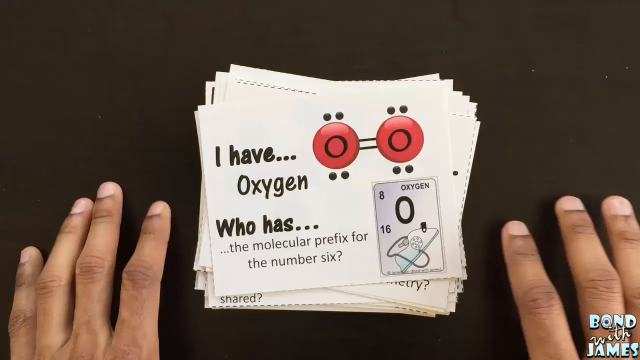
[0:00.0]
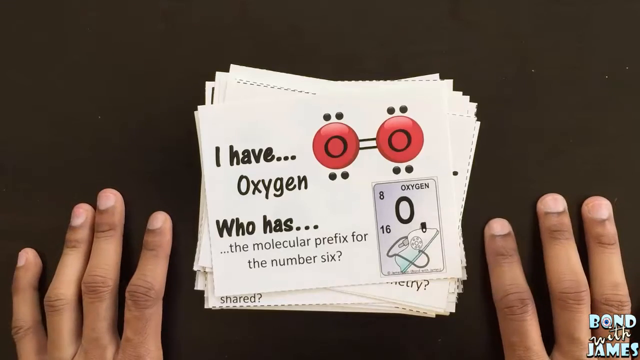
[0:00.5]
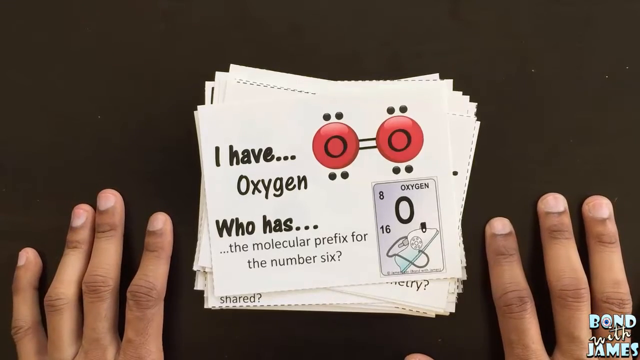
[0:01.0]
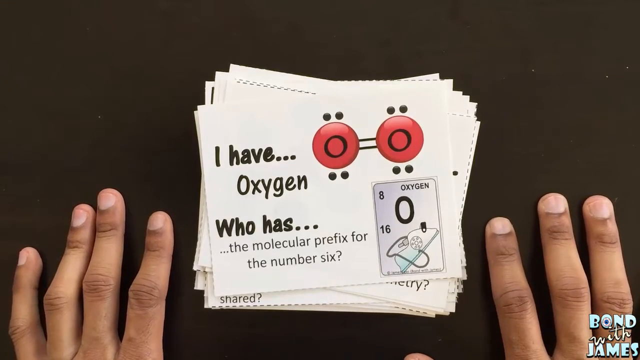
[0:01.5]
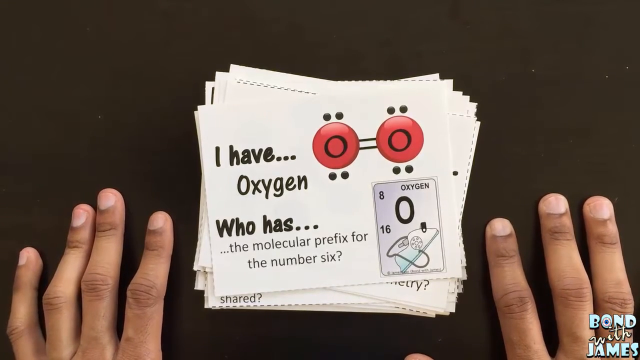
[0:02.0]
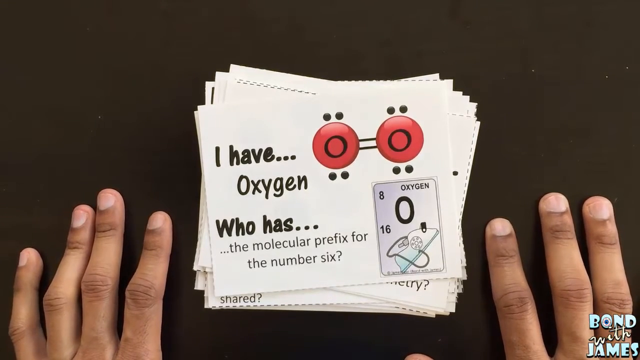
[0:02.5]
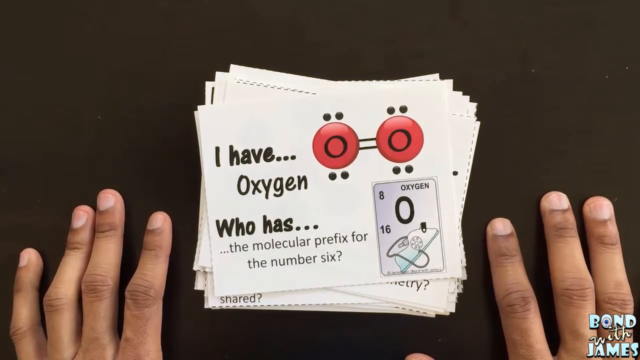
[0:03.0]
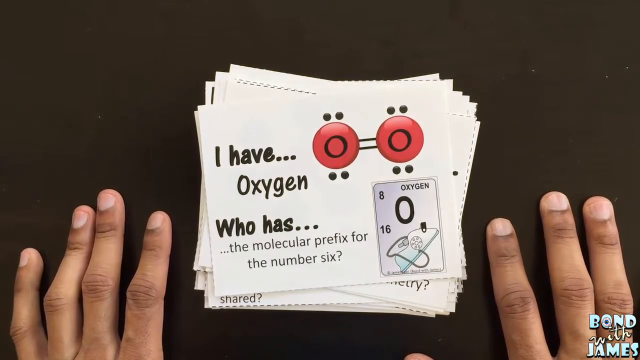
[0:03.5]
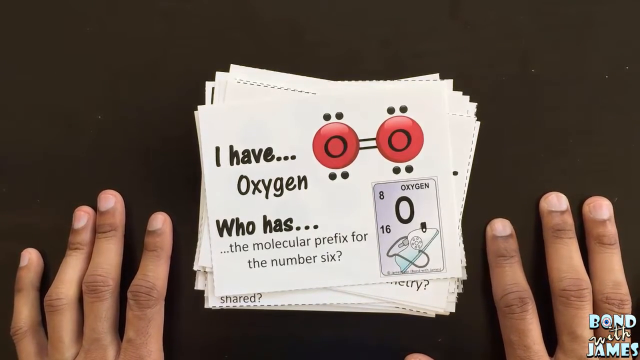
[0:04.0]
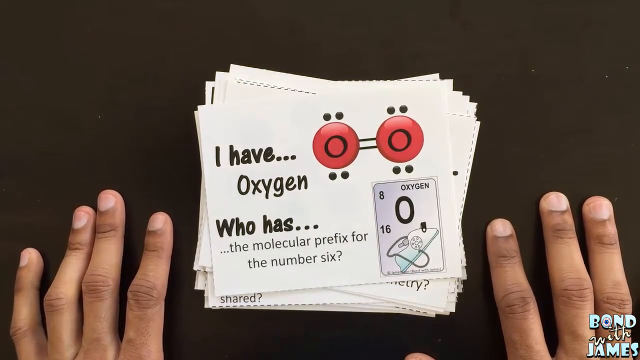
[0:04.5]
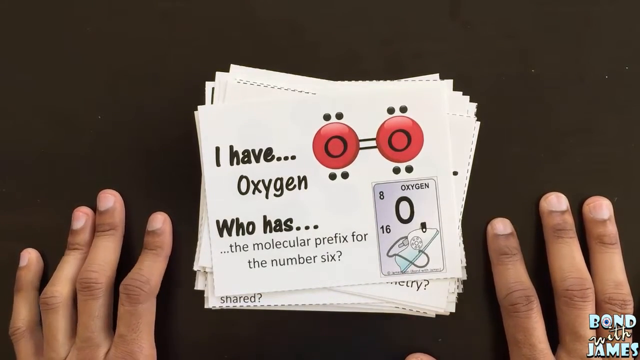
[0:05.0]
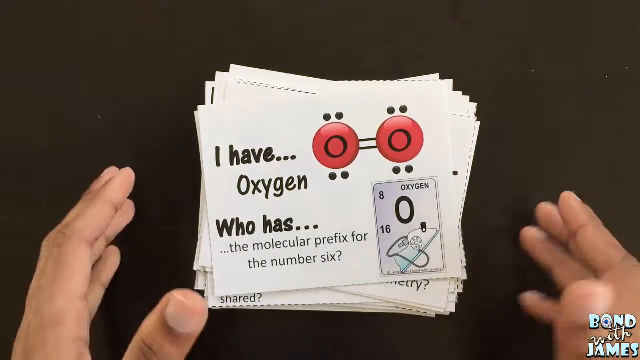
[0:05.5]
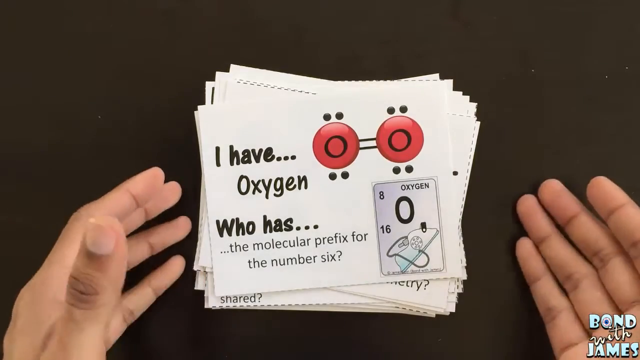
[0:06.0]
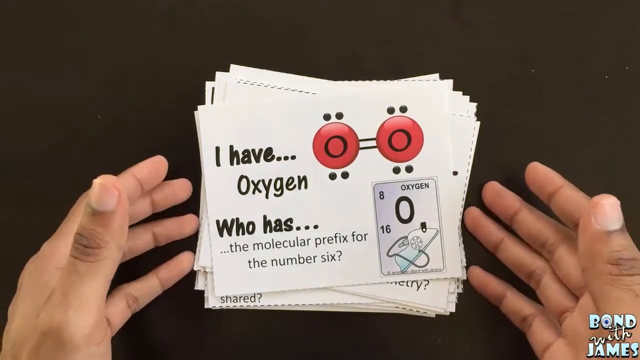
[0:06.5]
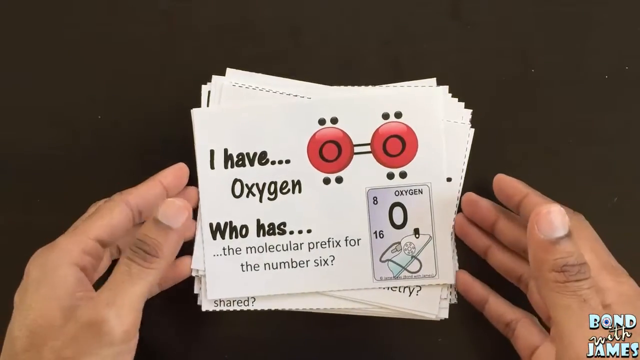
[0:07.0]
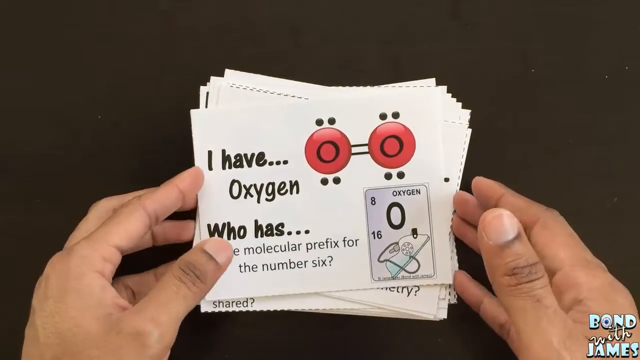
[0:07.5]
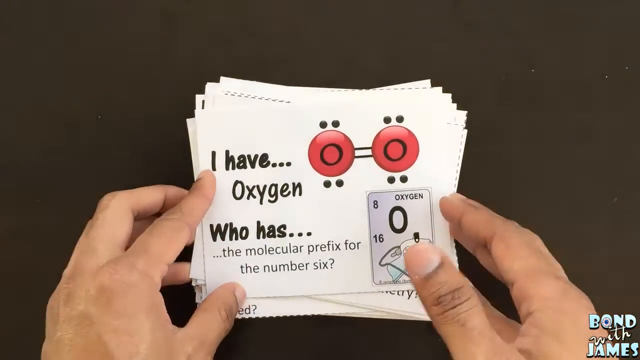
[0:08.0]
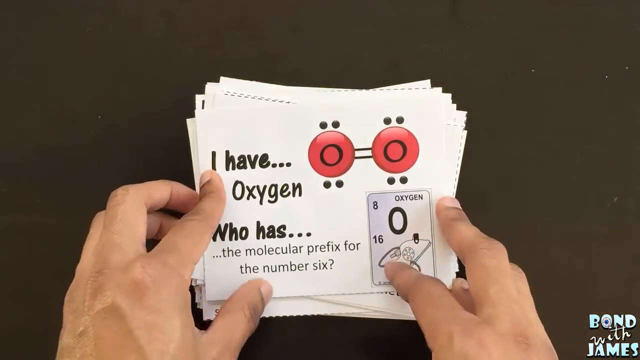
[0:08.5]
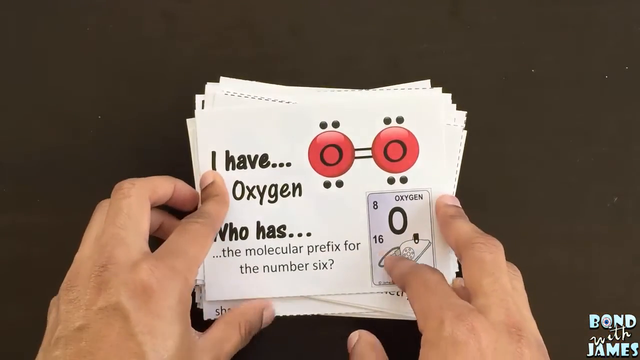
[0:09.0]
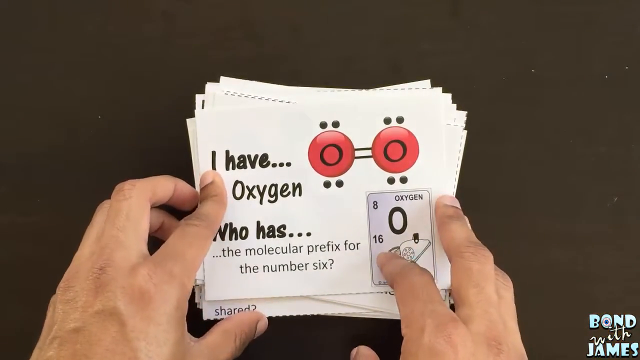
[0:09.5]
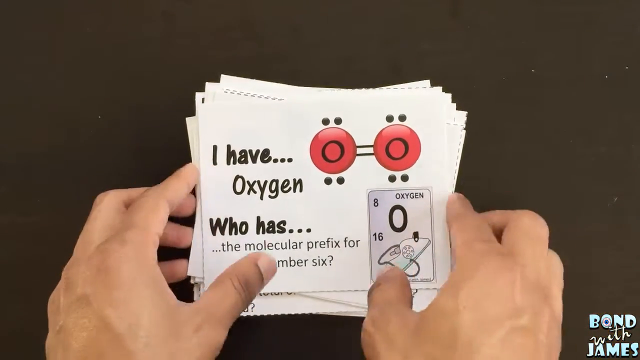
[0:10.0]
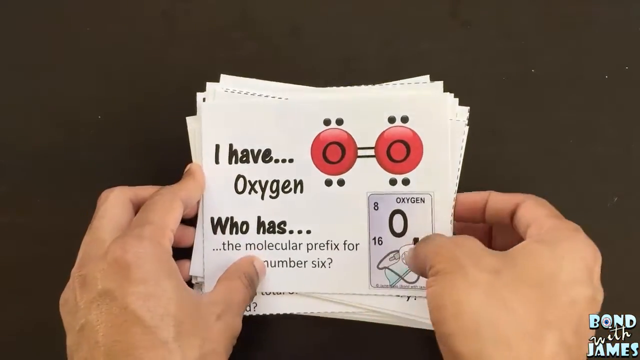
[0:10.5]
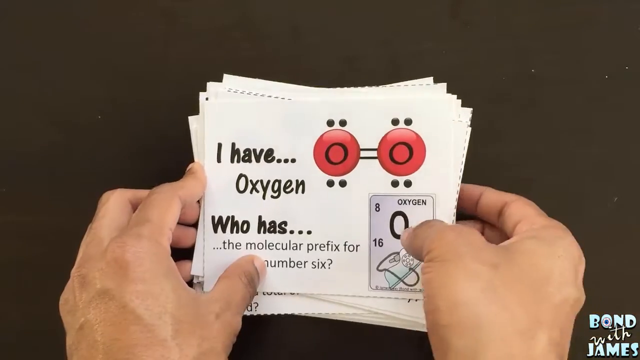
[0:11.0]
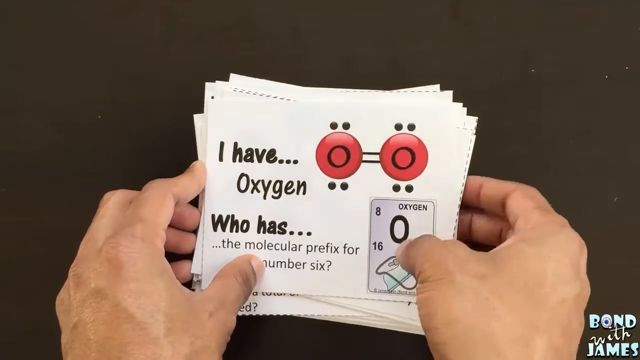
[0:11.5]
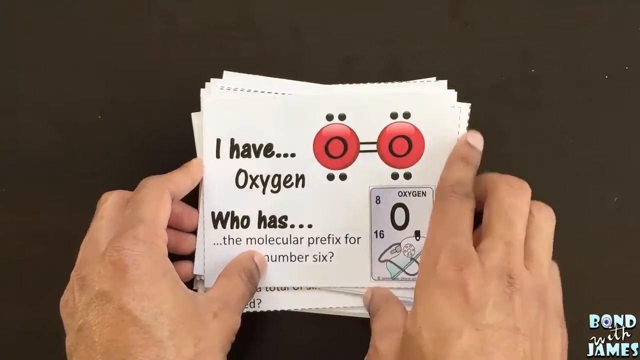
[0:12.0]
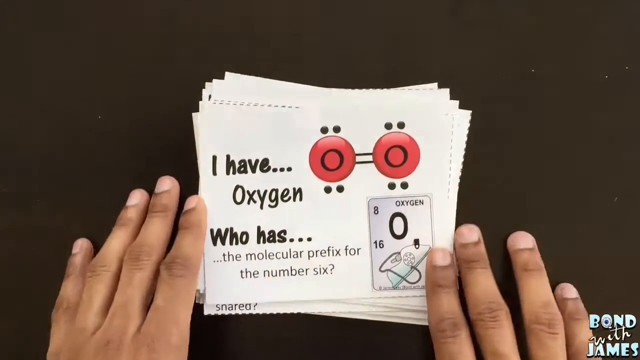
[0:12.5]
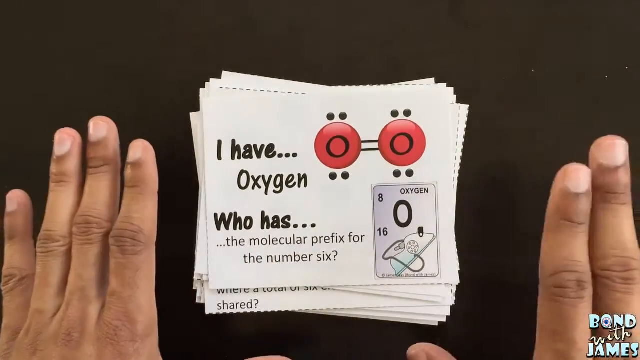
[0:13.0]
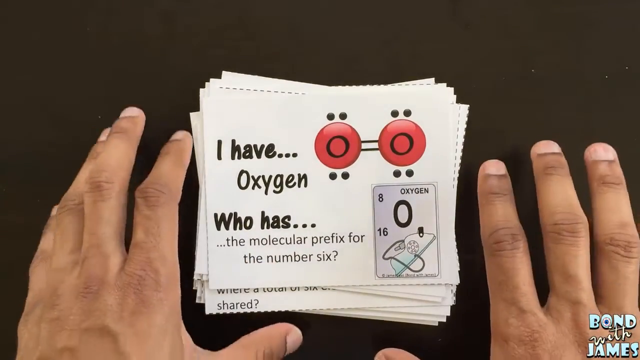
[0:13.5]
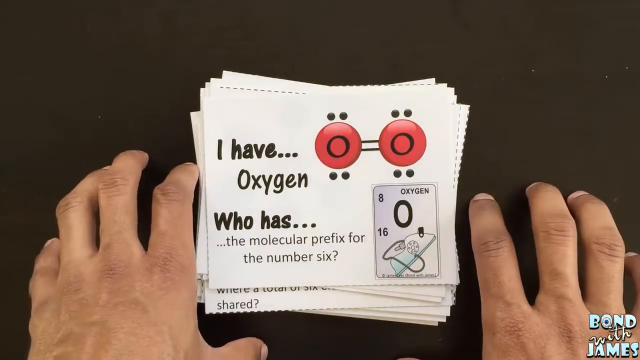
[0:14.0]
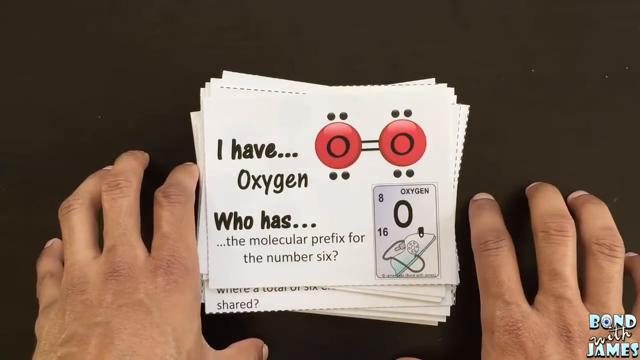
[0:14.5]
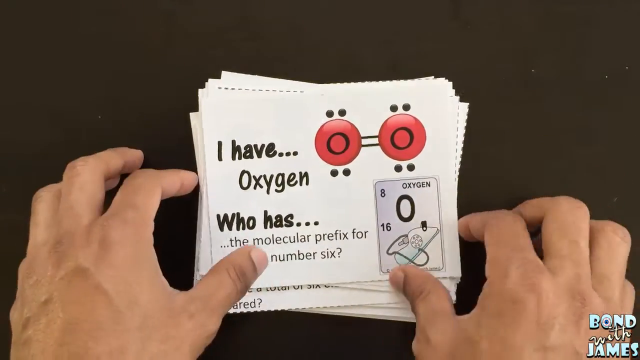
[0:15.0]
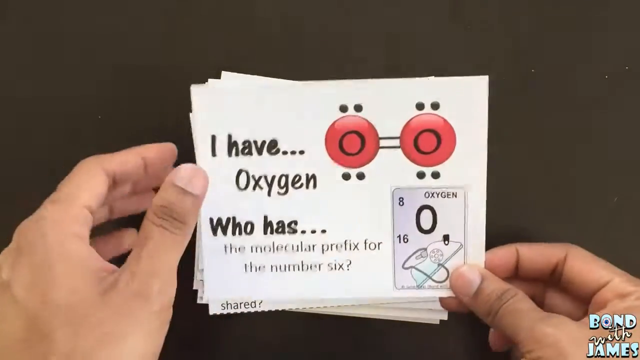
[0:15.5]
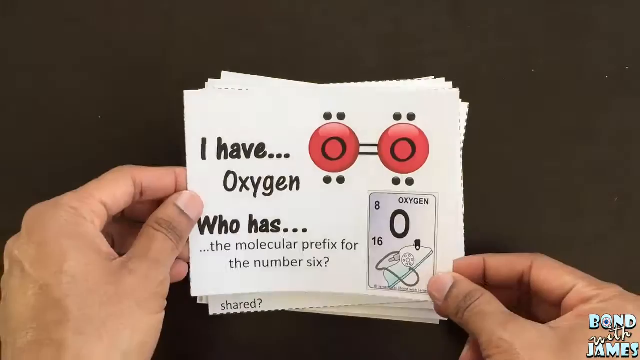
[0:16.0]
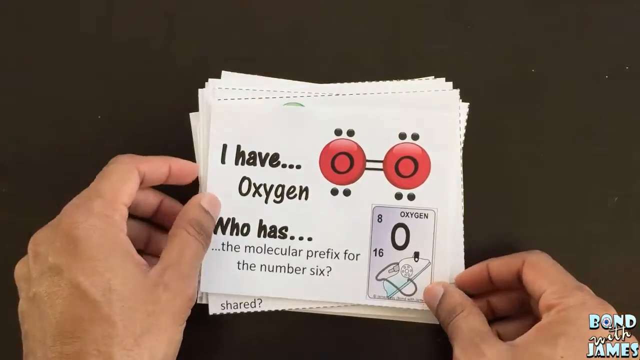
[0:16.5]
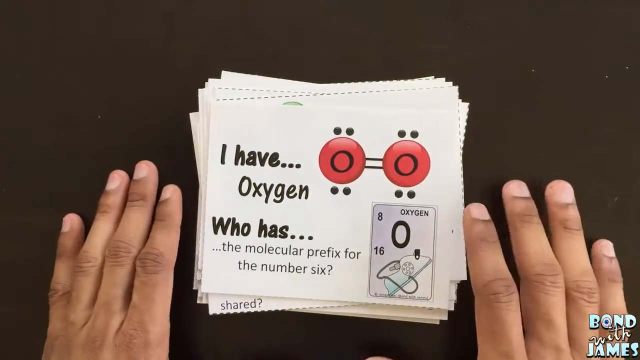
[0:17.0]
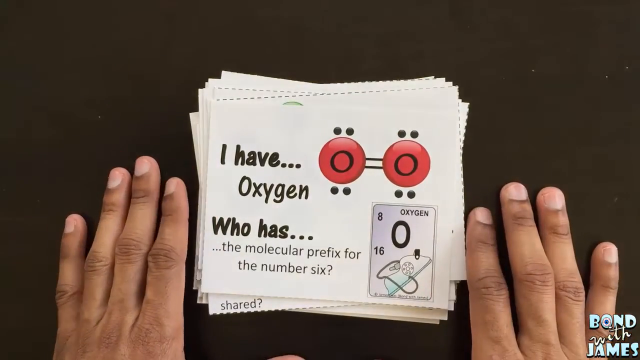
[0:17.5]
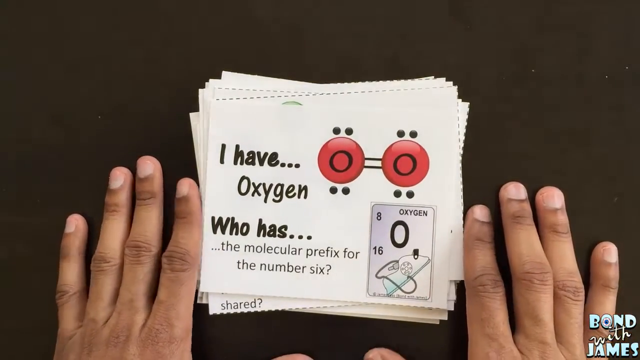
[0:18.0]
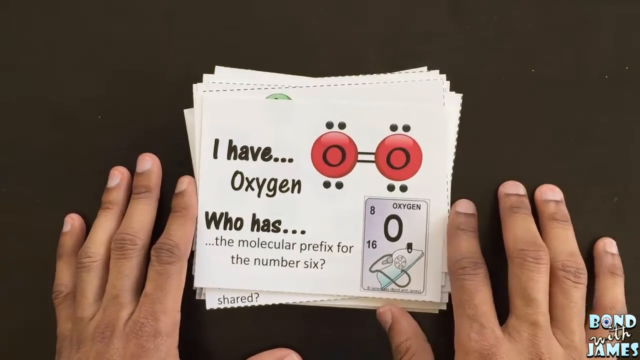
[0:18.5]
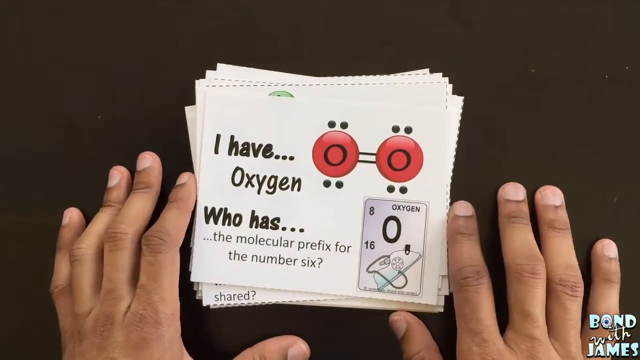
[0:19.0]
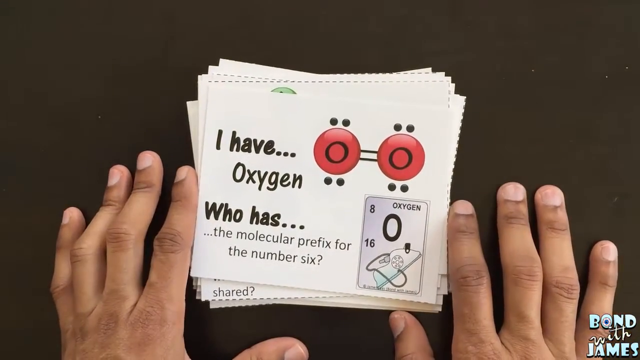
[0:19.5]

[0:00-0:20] Two hands are placed on a table next to a pack of cards. The top card reads "I have oxygen" and shows something that looks like two molecules, along with the text "who has the molecular prefix for the number six." On that card is another box containing oxygen and the numbers 8 and 16. A hand grips the pack of cards firmly and tries to arrange it properly. The hand picks up one card and immediately drops it back, then returns to its initial position directly on the table. The person continues trying to arrange the cards properly. The molecular prefix is in red, while the writing on the other card is black, and the card's background is white. The nails look well trimmed, the hands are neat, and they look like an African person's hands.